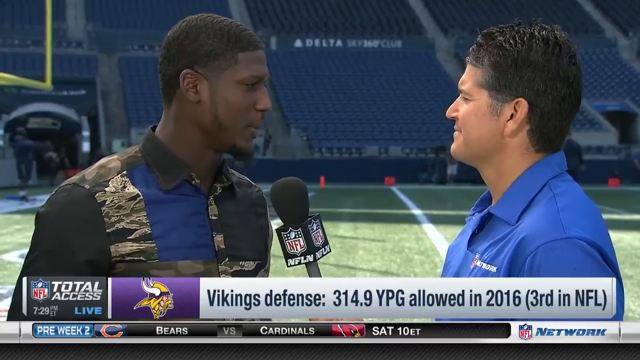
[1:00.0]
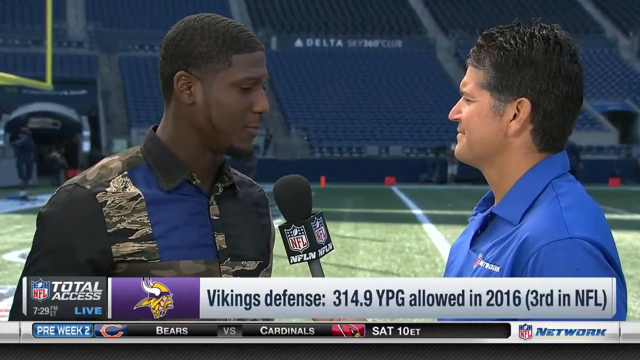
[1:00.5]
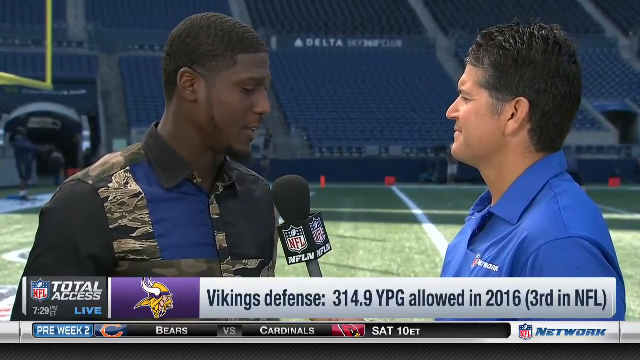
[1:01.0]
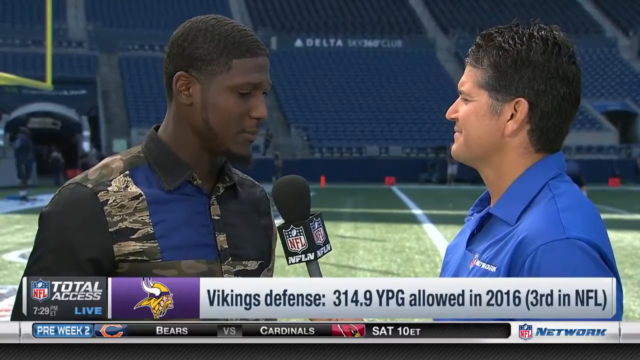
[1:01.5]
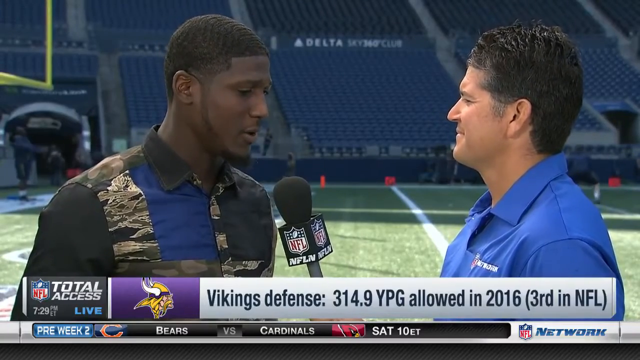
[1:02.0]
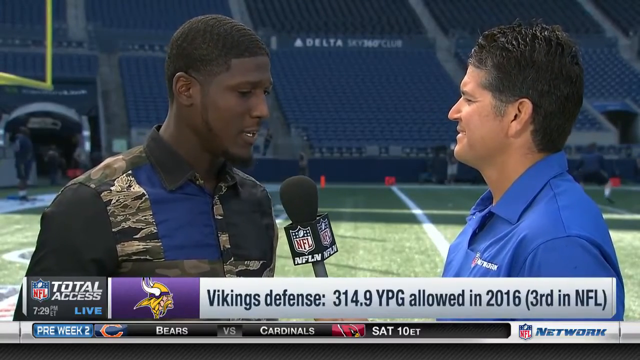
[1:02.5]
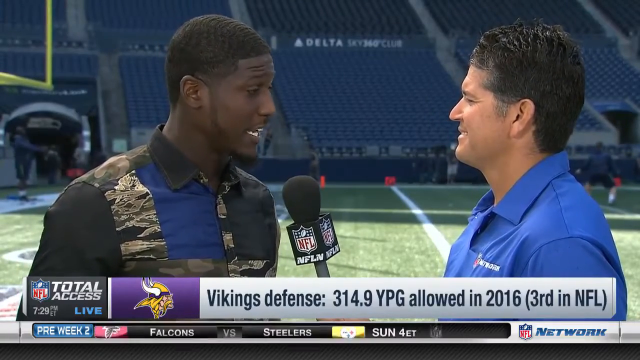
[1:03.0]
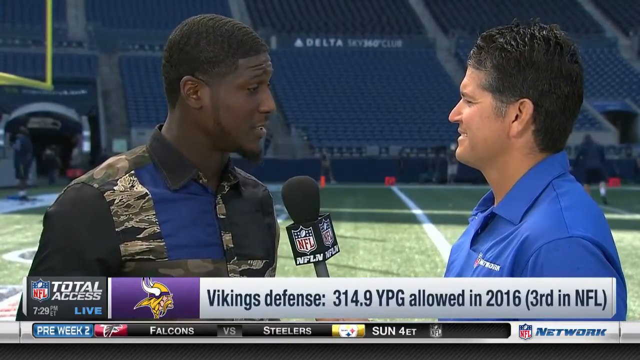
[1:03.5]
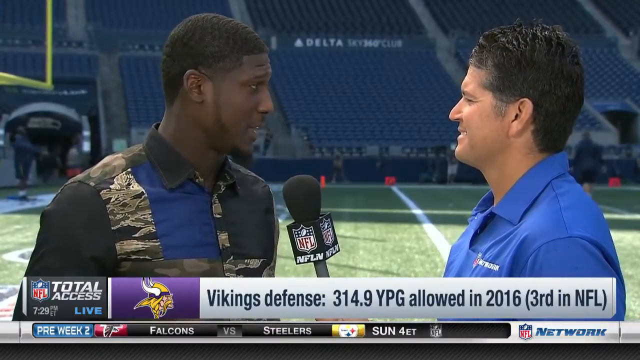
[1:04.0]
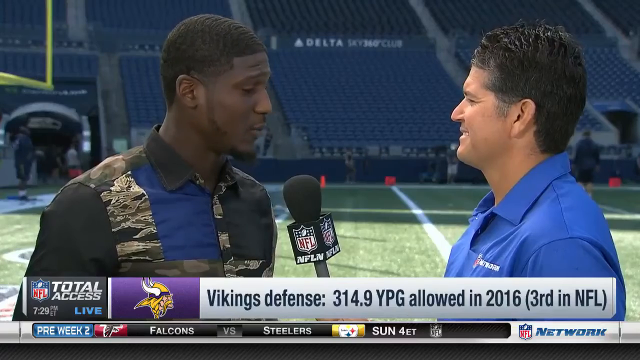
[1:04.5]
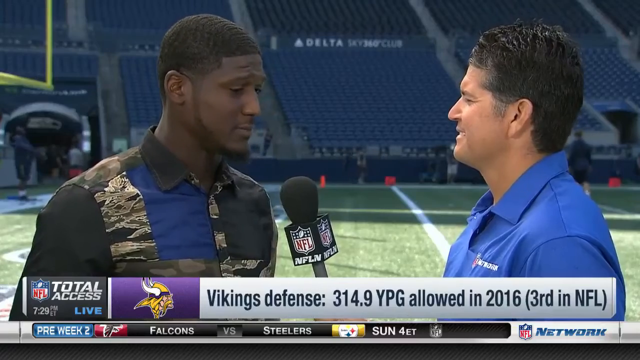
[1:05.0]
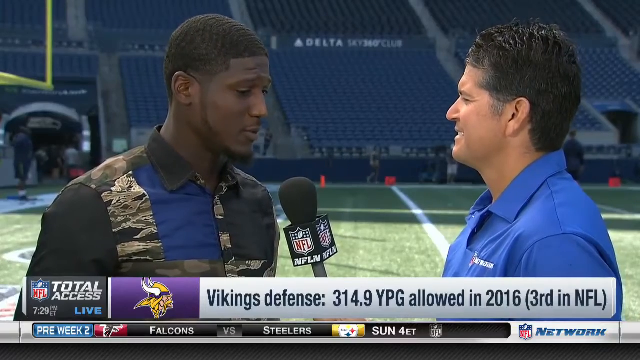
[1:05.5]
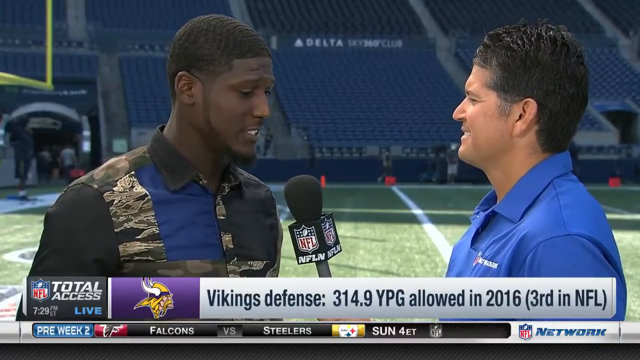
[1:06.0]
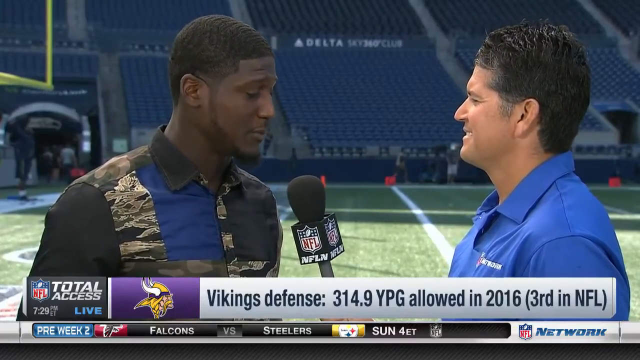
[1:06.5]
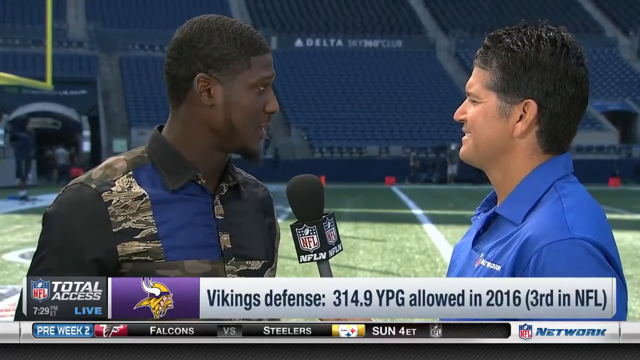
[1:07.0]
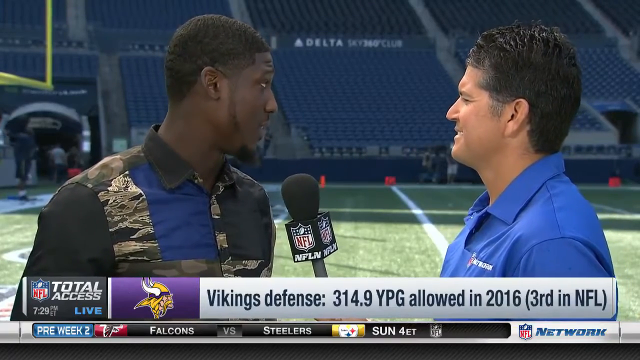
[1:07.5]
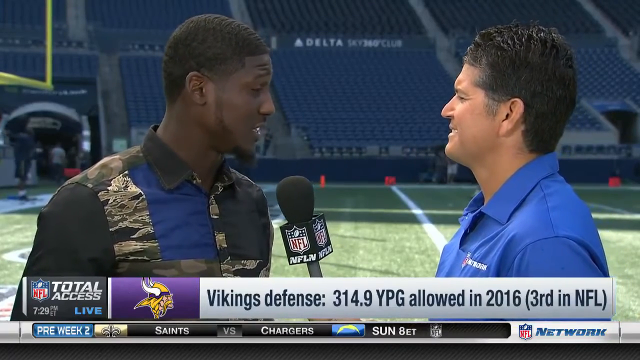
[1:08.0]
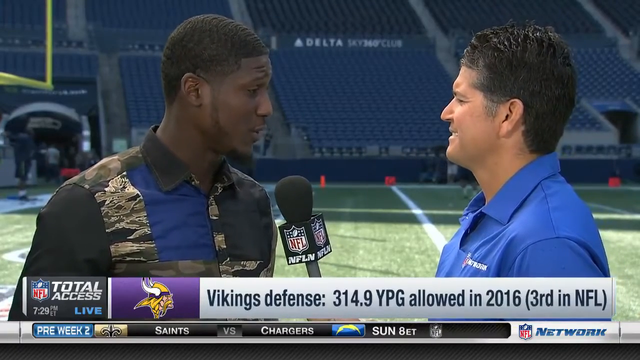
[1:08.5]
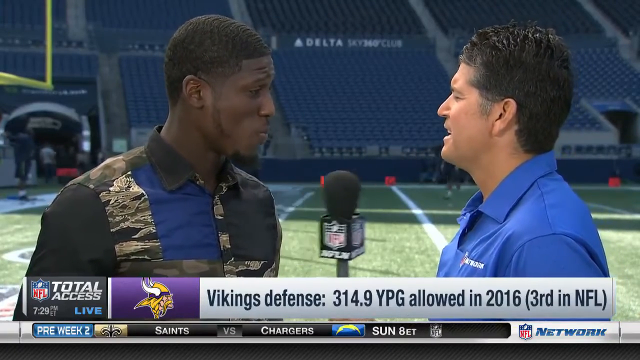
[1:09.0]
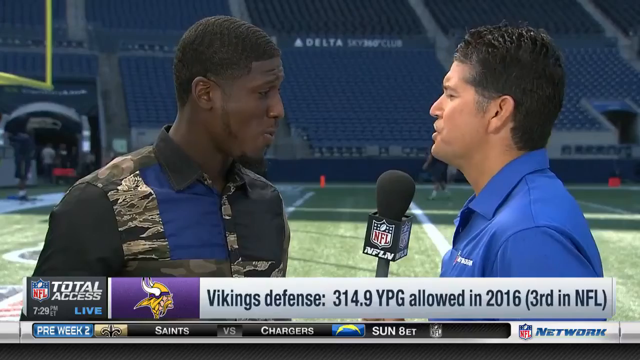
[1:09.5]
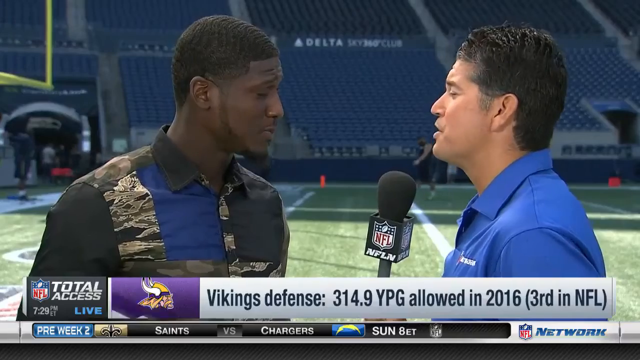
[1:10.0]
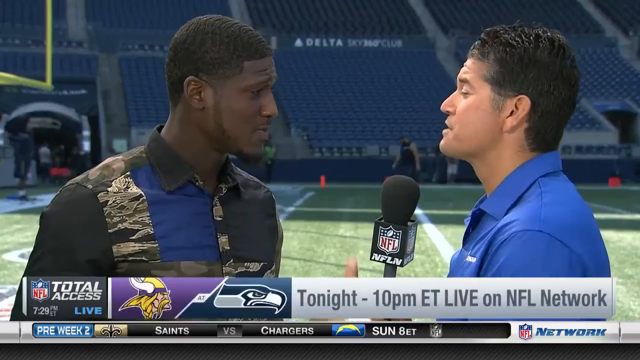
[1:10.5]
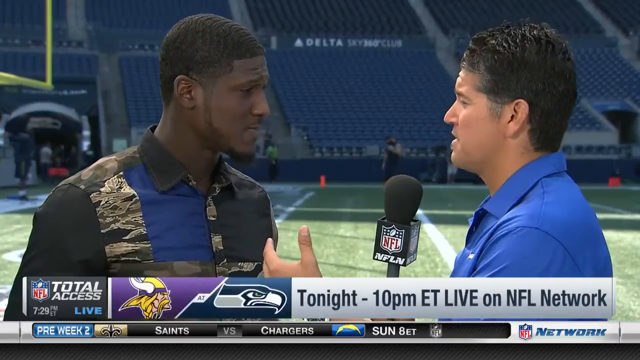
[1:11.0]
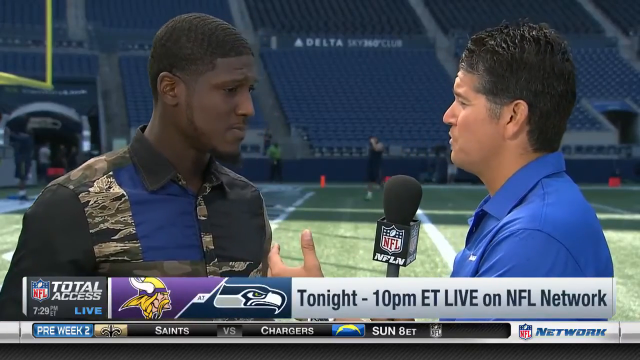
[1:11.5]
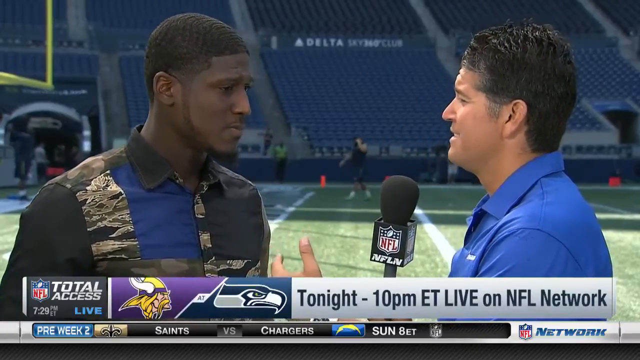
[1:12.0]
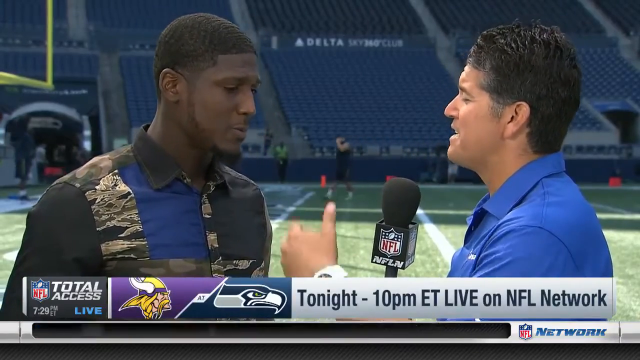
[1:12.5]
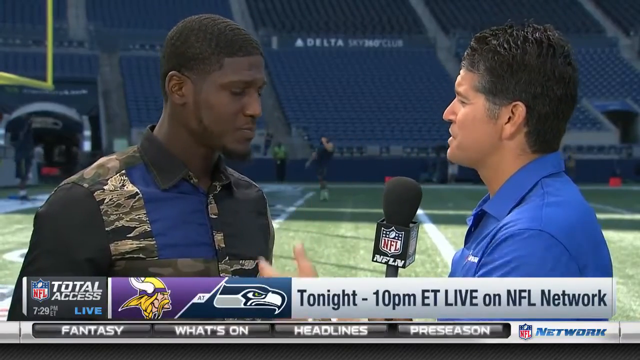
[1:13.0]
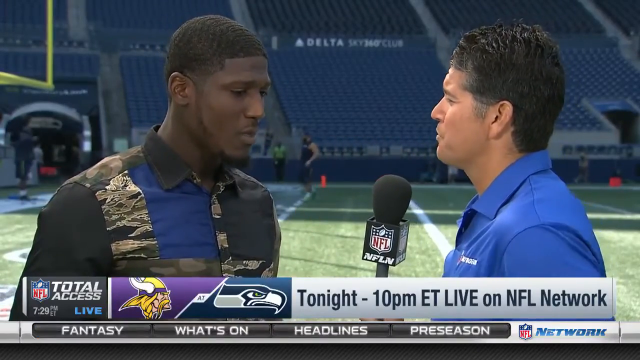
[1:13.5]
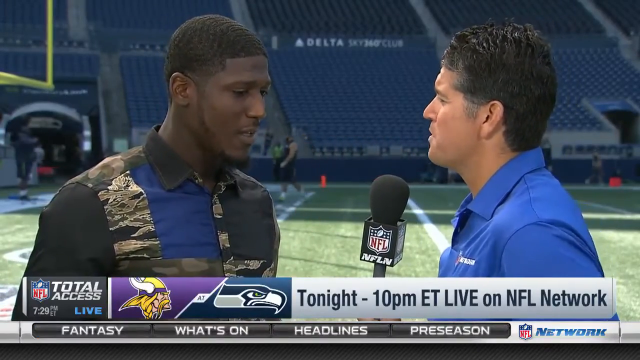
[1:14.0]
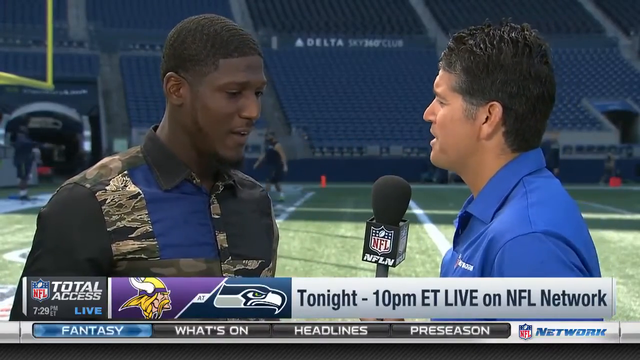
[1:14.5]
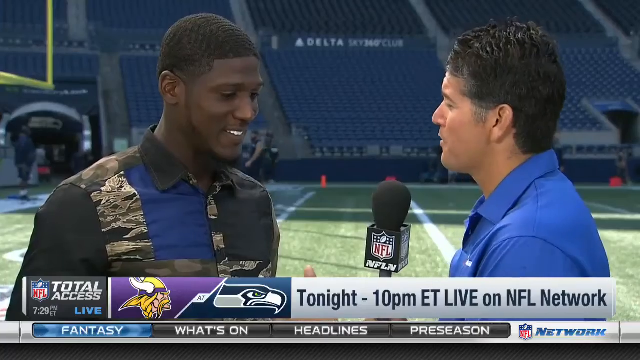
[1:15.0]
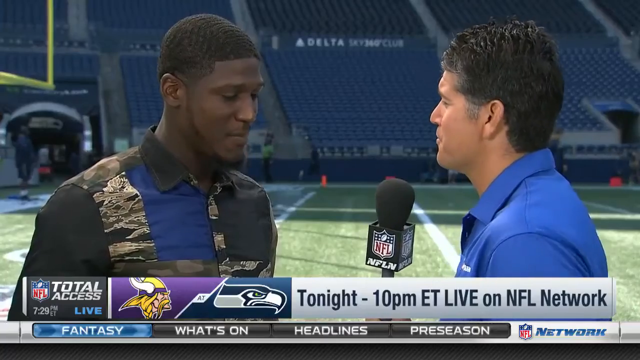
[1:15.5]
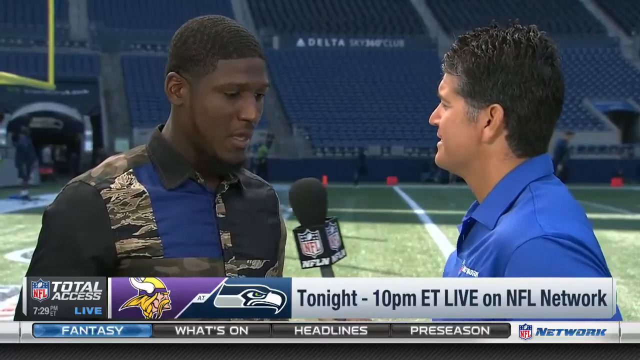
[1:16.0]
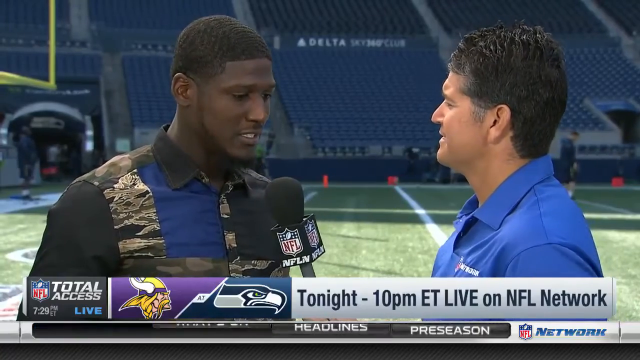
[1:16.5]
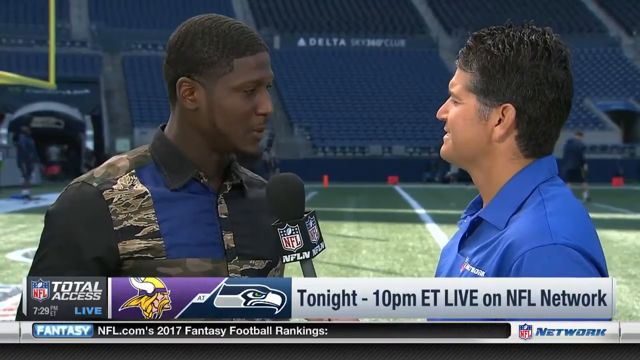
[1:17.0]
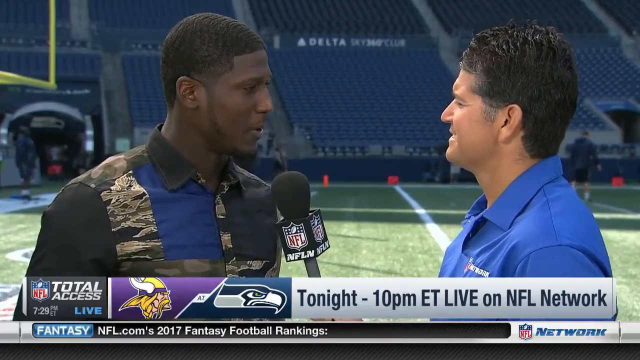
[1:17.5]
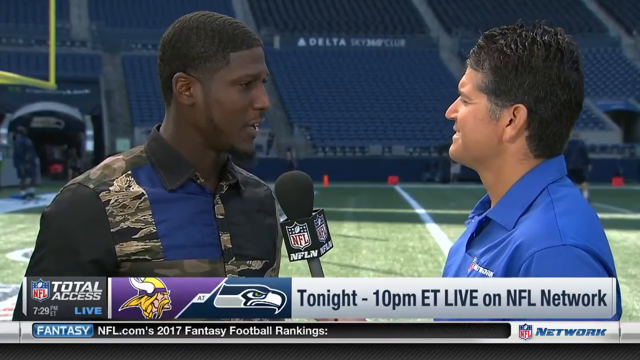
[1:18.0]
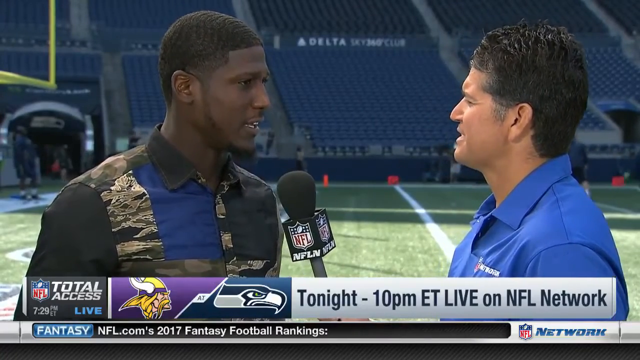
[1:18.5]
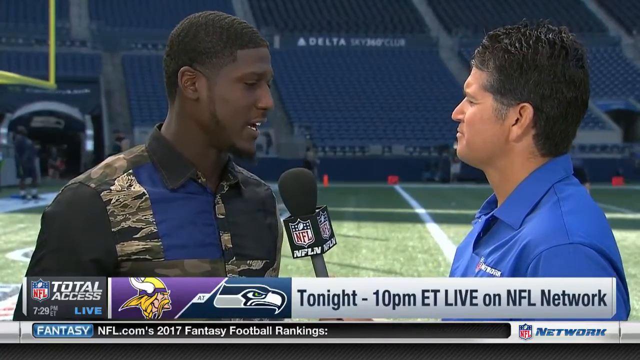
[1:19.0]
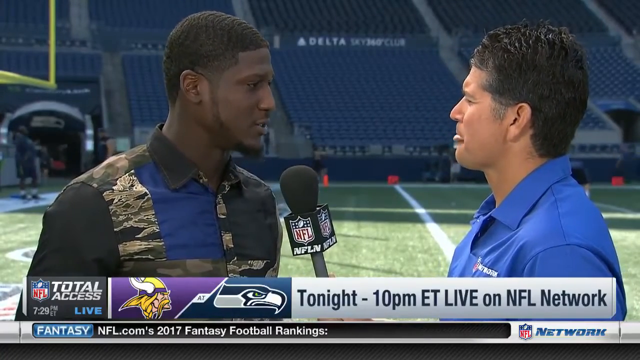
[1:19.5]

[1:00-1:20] Two men stand facing inwards, one on the right and one on the left. The man on the right points a microphone towards the other man, who is talking. They stand in front of an American football pitch that is completely empty, with nobody in the tiered seating. A few people walk back and forth in the background at the edge of the pitch. The man on the left wears a very smart shirt with different coloured panels that all seem to be different colours of military outfits; he is a Black man with very short hair and a small beard. The other man is a white man with dark hair and a blue polo shirt. Text graphics at the bottom of the screen show an NFL logo with the time, 7.29pm, with headlines and information appearing in the text box. It then changes to show a Vikings logo and an eagle head, and to the right it reads "Tonight 10pm ET live on NFL Network". The interviewer raises his left hand in a kind of circular motion as he talks, then moves the microphone back under the other man's mouth.